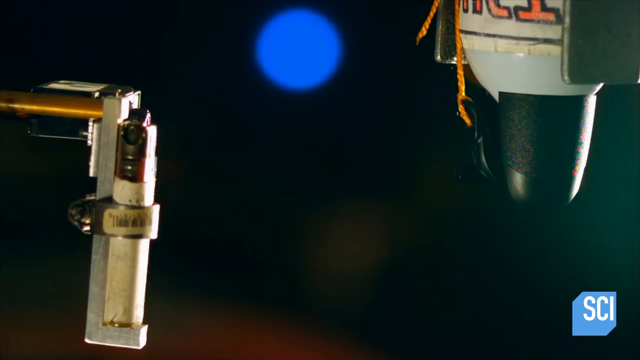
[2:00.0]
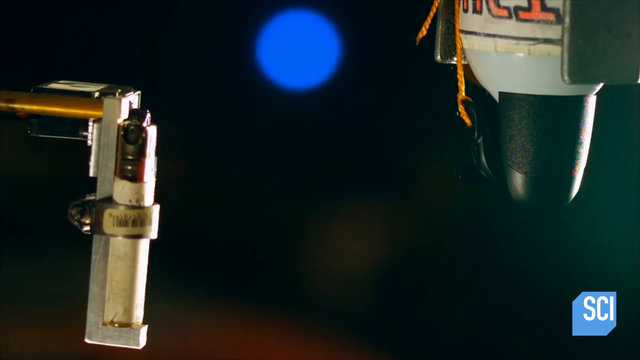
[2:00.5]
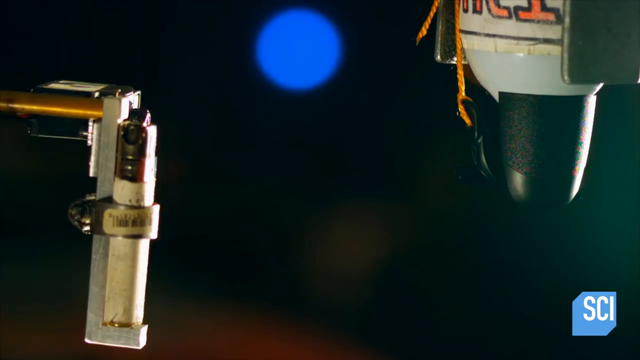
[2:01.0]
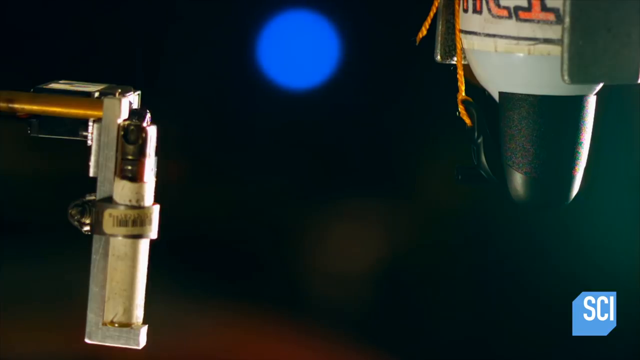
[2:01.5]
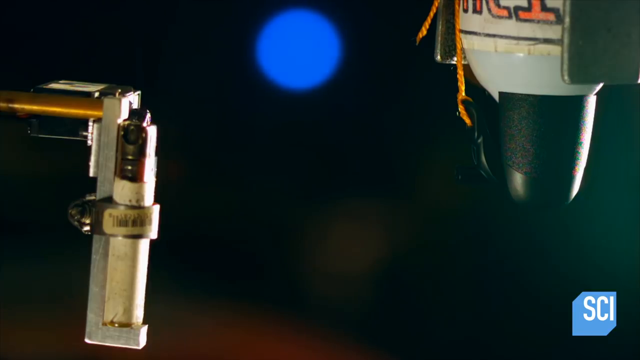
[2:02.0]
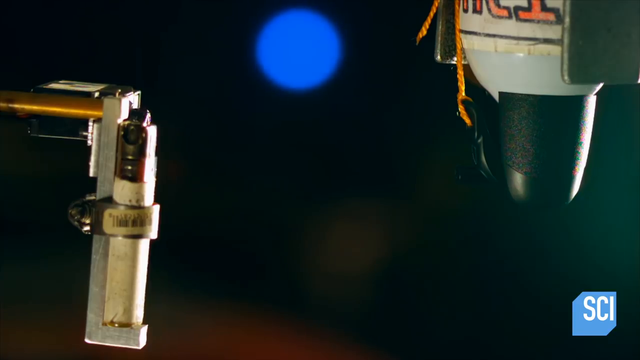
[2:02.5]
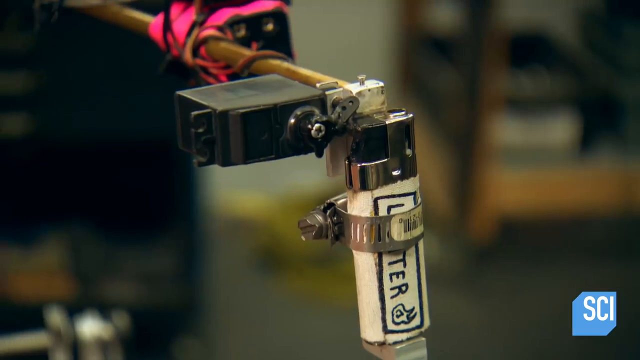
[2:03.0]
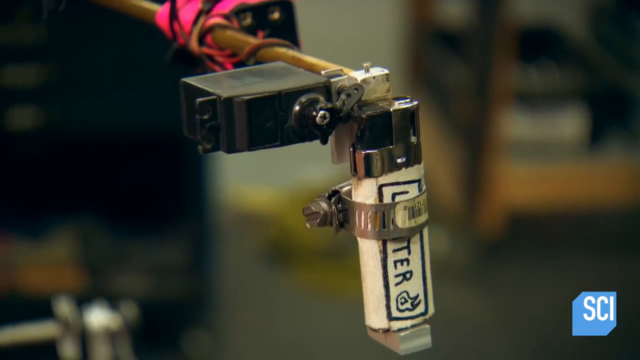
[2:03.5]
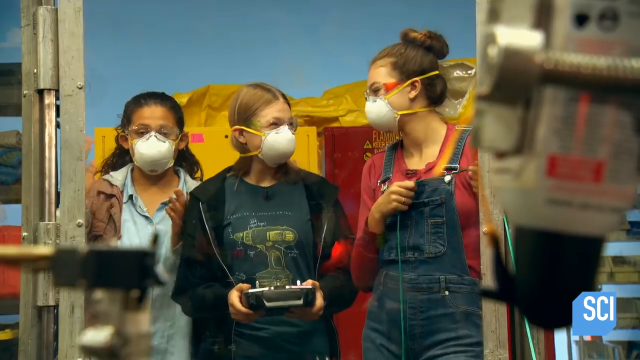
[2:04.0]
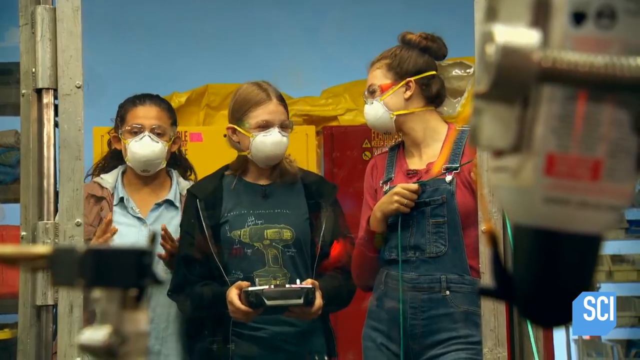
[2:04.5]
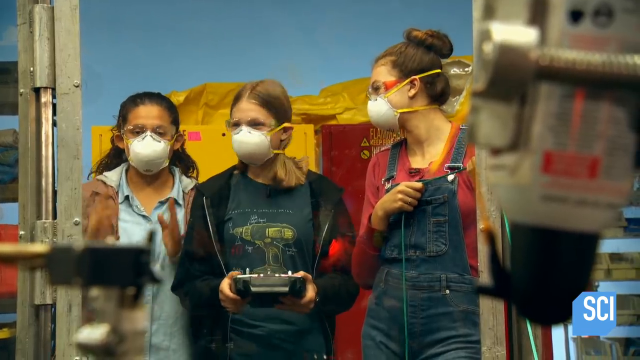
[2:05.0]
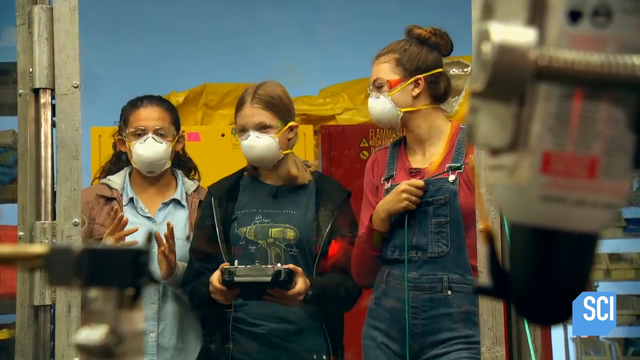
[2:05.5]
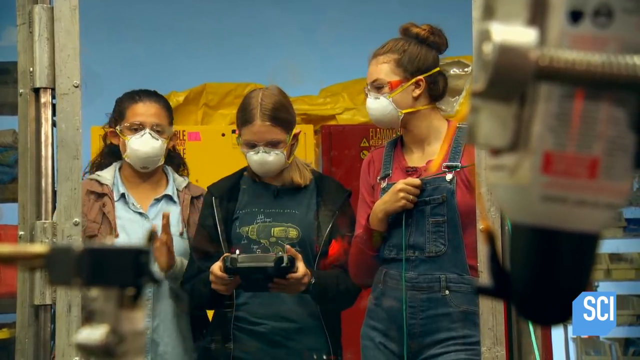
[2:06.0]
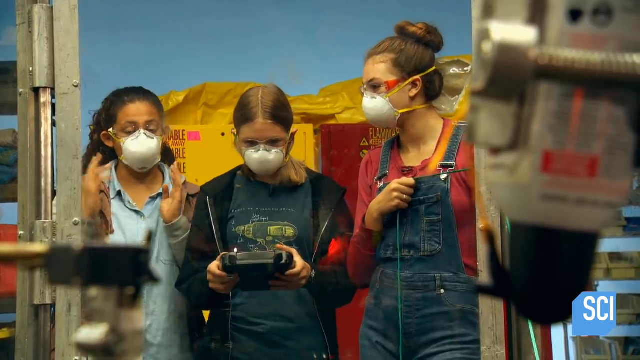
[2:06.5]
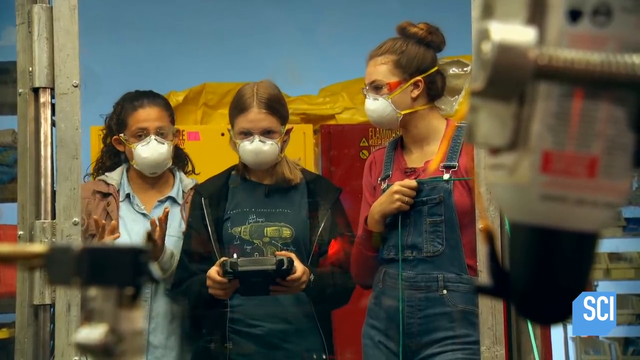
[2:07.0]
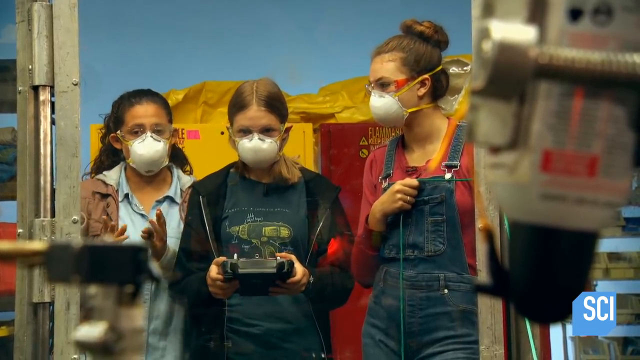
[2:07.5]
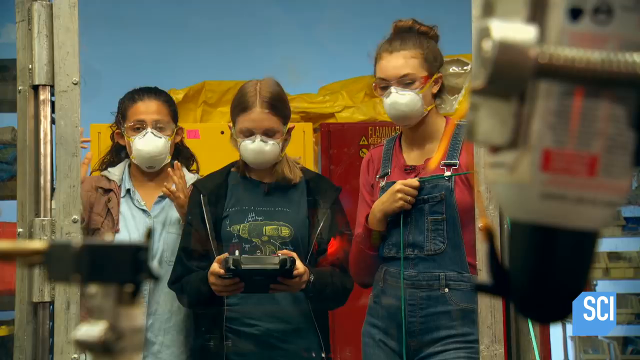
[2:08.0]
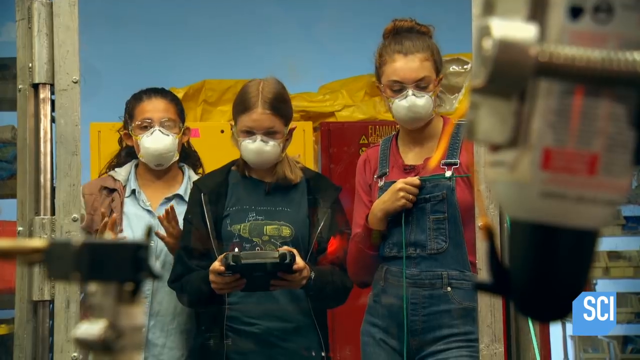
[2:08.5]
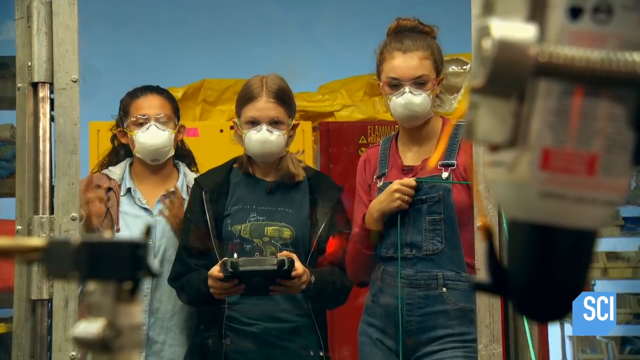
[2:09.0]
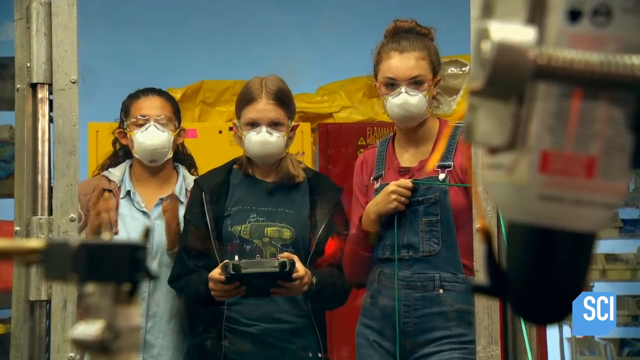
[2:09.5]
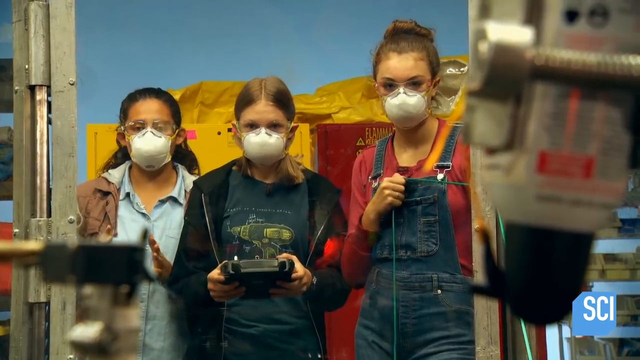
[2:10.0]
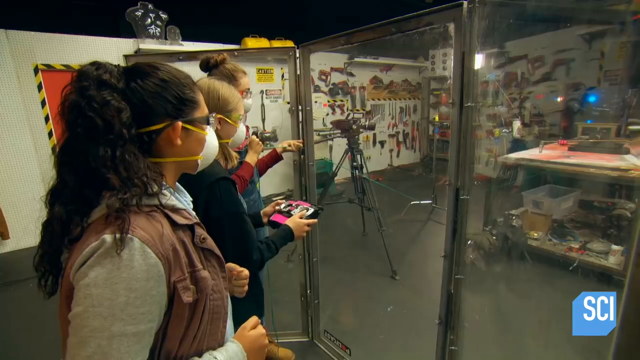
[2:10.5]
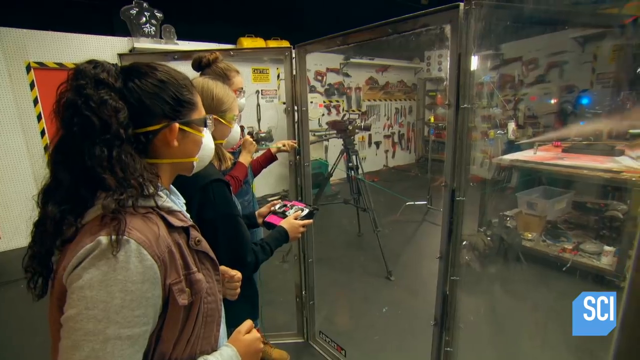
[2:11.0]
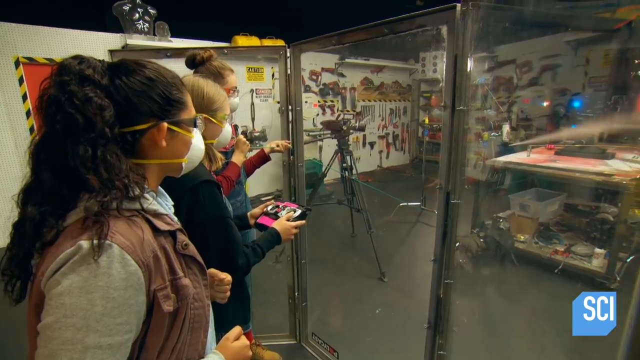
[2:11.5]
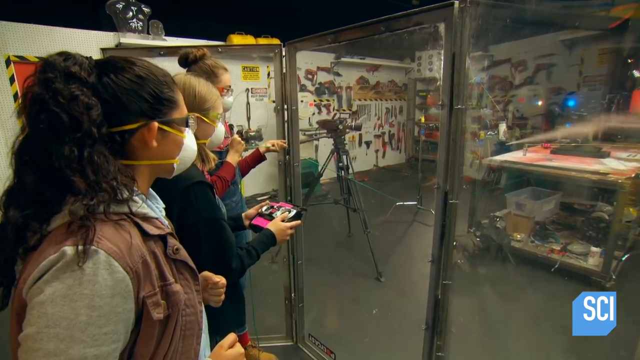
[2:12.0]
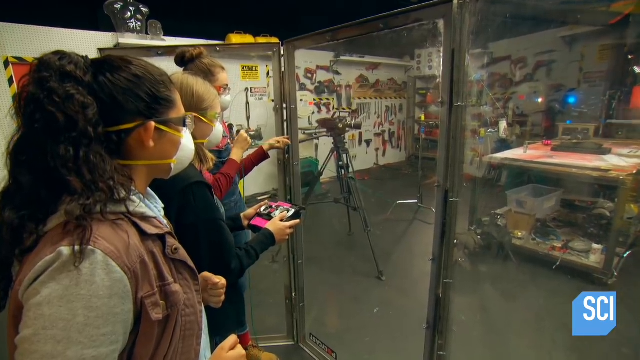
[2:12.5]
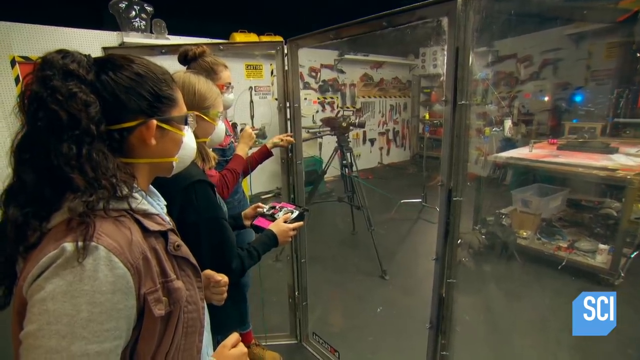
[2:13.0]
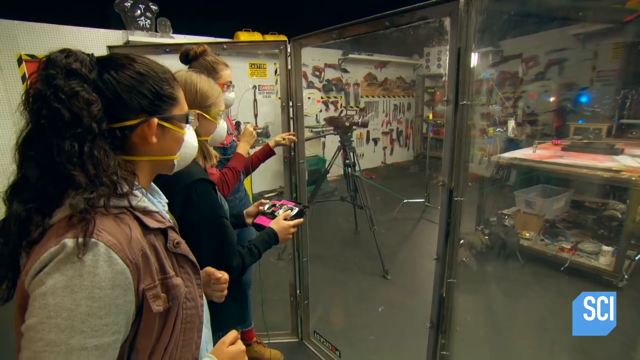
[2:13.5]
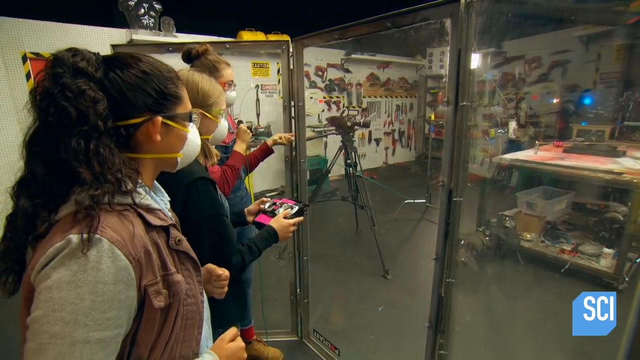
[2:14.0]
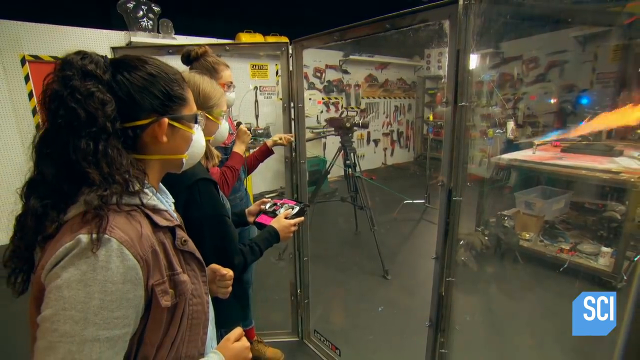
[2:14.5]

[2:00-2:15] A title reads "How flammable compressed air is by Mythbusters." Three girls are behind clear safety glass, all wearing protective gear, goggles and masks, with their hair back, long sleeves, pants and closed-toe shoes. One girl holds a green string that will trigger the bust off spray, which is mechanized to turn on when she pulls it. The girl in the middle has a gamer controller used to ignite the lighter opposite the can of spray. The third girl, in a blue jean shirt, describes what is happening with her hands in motion.